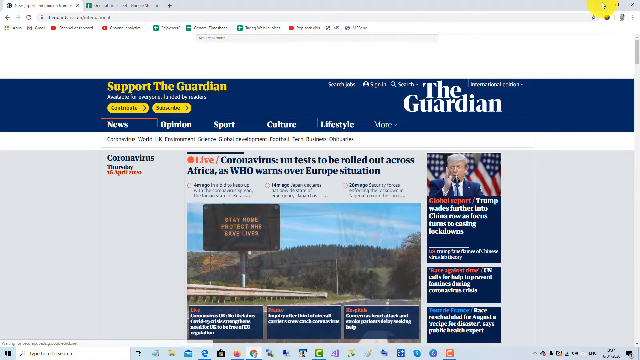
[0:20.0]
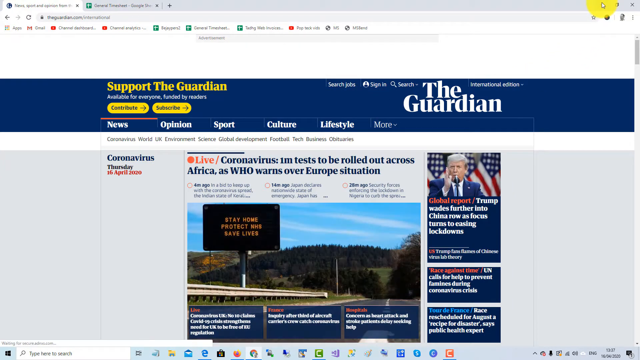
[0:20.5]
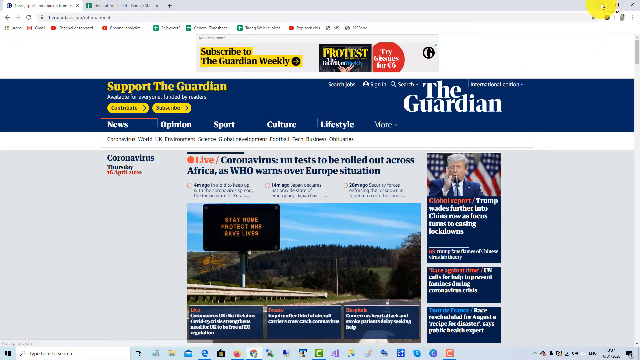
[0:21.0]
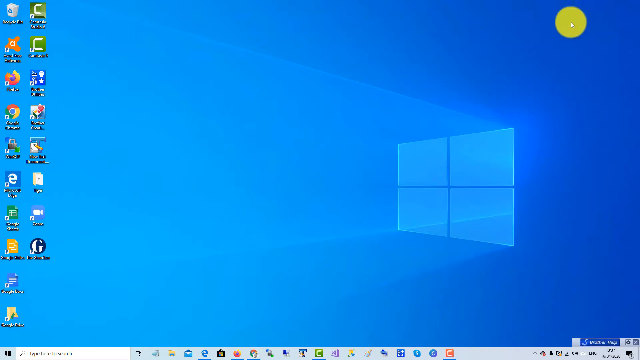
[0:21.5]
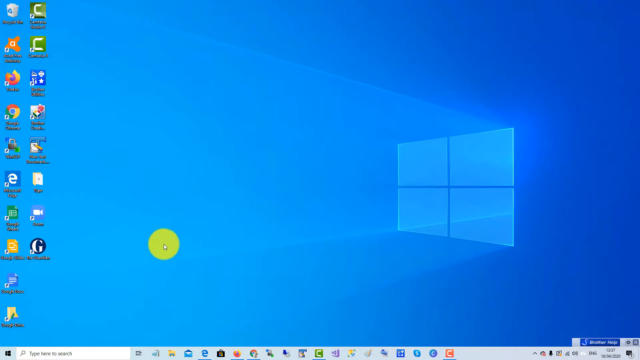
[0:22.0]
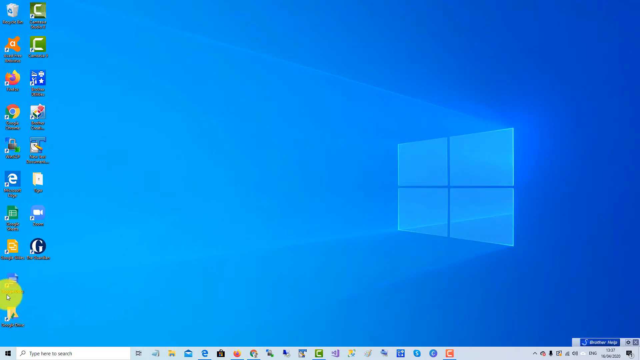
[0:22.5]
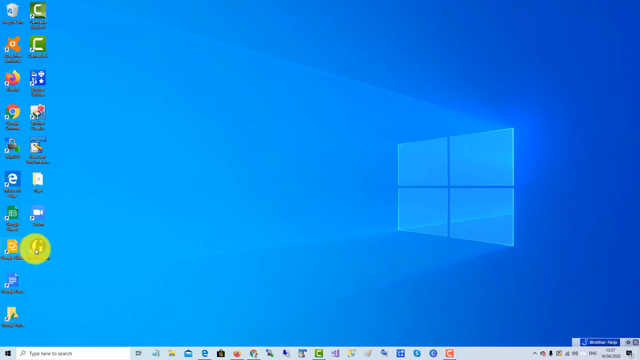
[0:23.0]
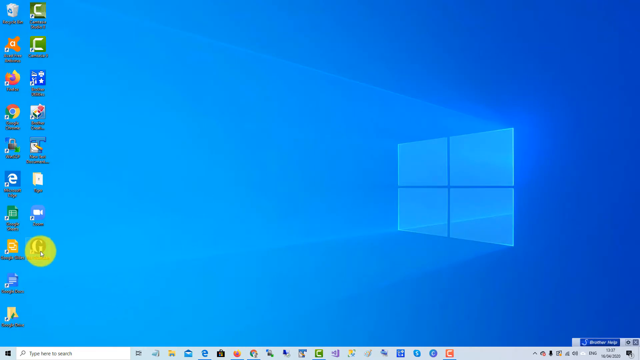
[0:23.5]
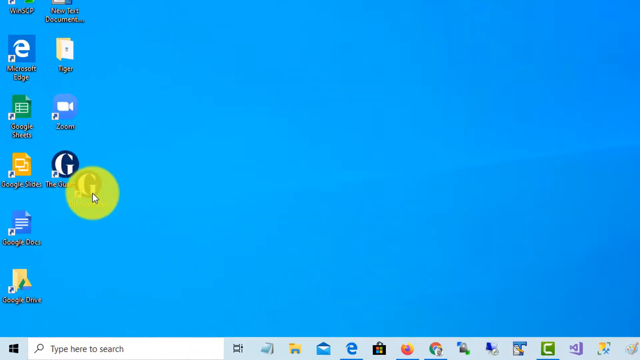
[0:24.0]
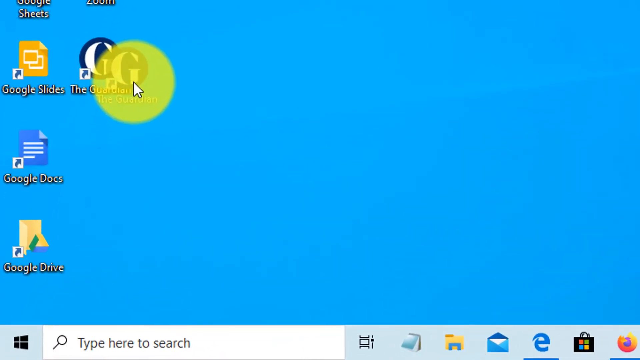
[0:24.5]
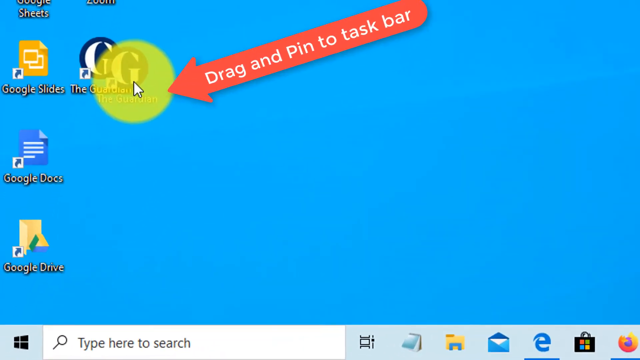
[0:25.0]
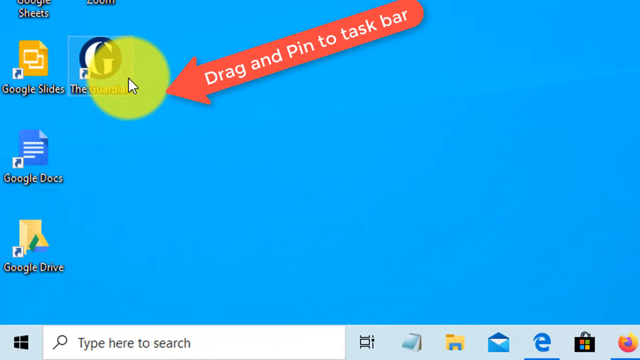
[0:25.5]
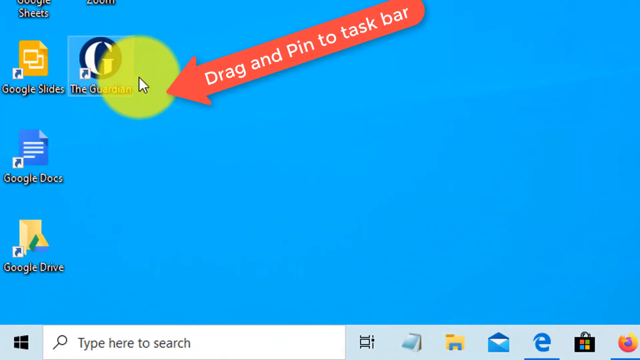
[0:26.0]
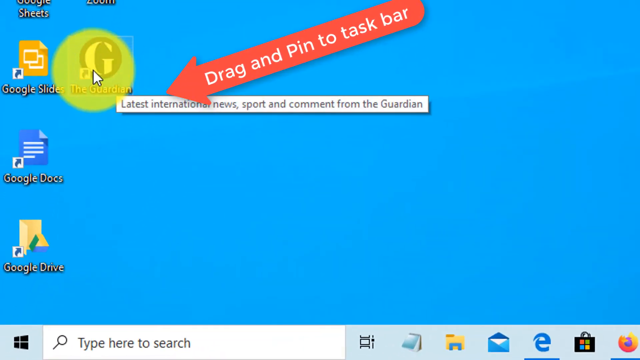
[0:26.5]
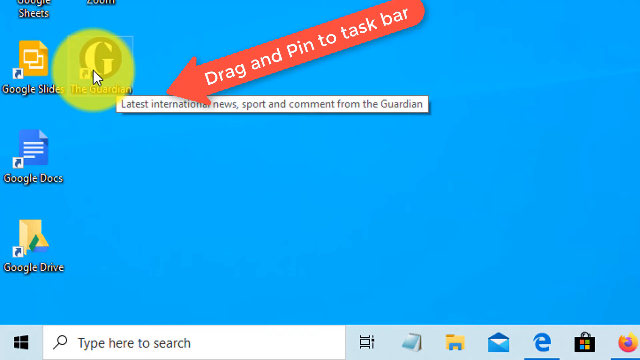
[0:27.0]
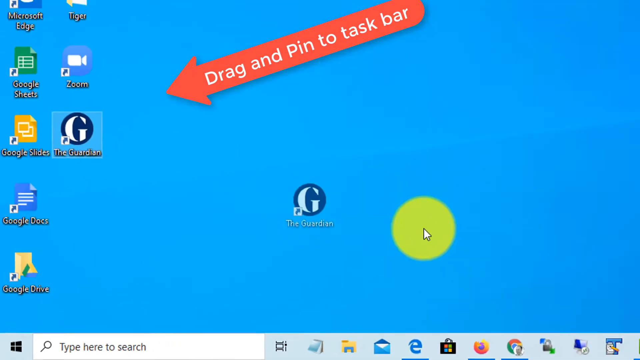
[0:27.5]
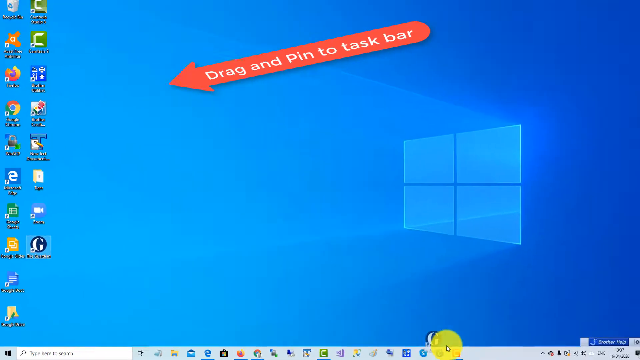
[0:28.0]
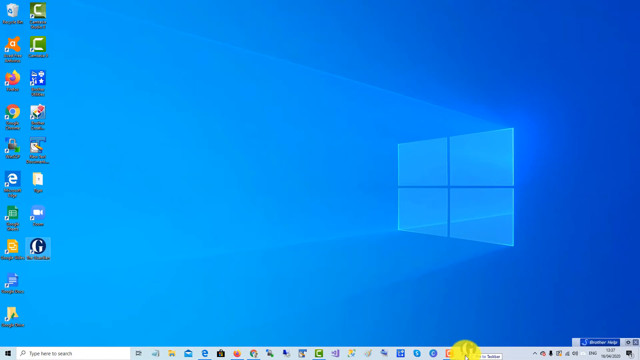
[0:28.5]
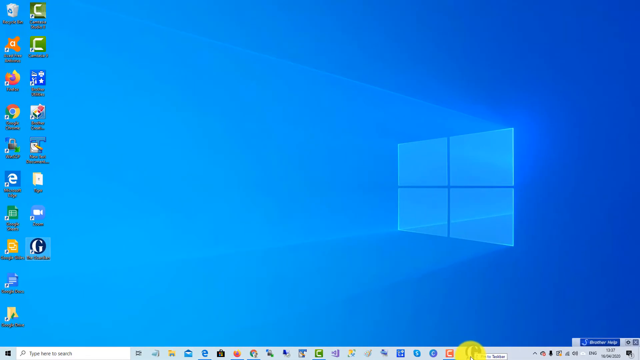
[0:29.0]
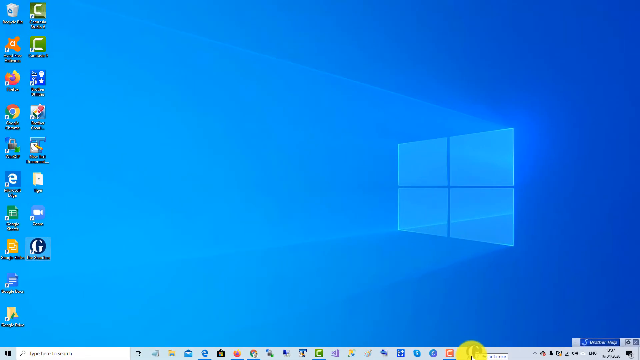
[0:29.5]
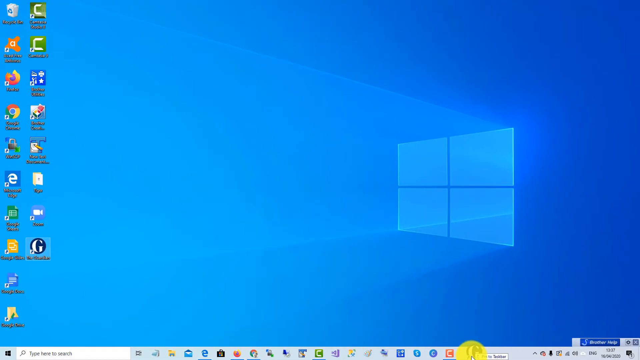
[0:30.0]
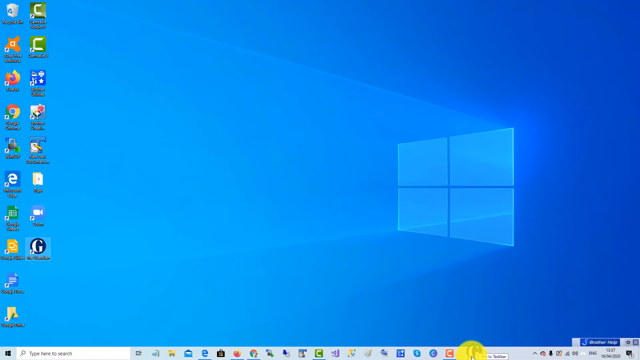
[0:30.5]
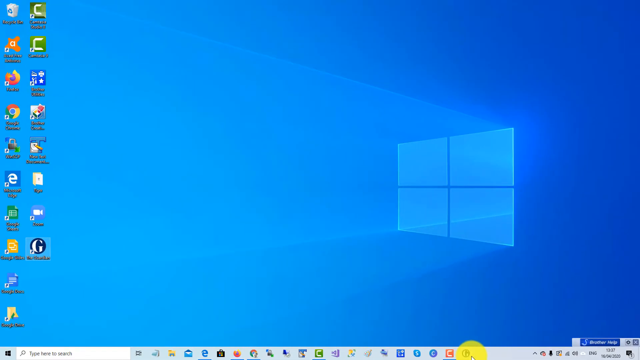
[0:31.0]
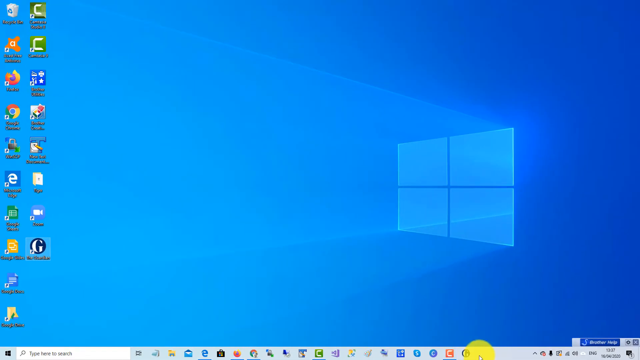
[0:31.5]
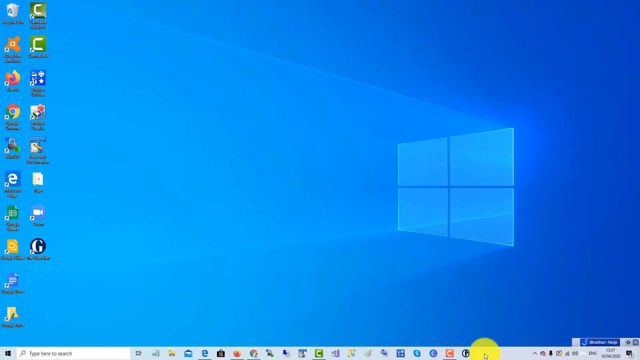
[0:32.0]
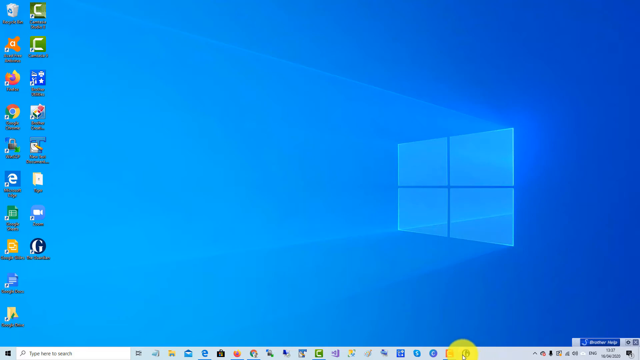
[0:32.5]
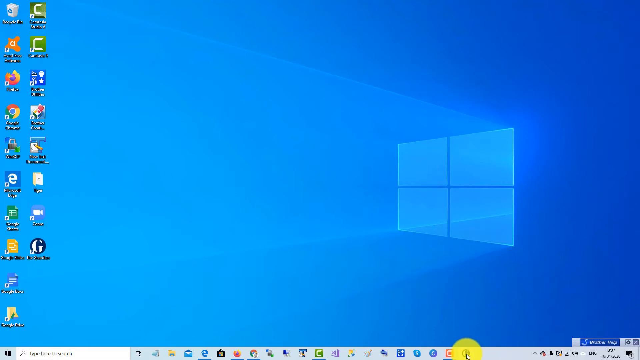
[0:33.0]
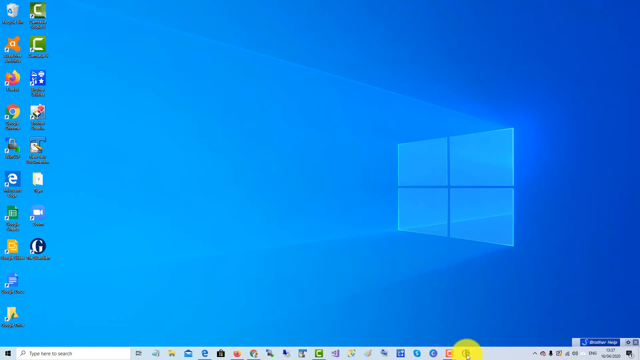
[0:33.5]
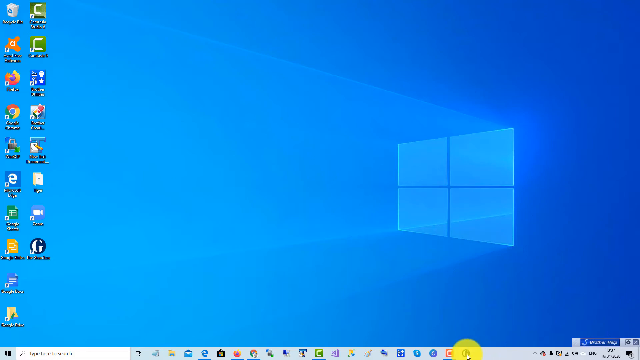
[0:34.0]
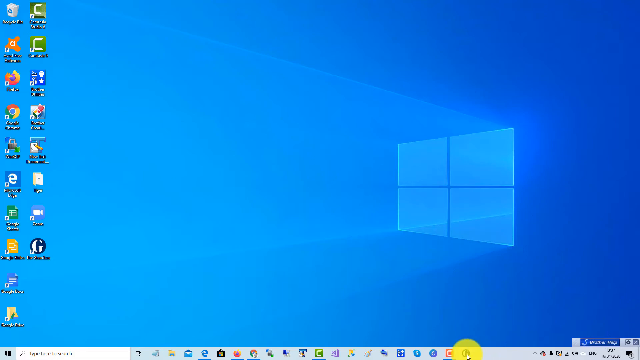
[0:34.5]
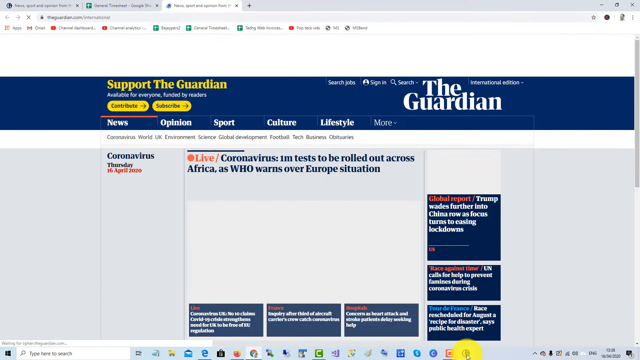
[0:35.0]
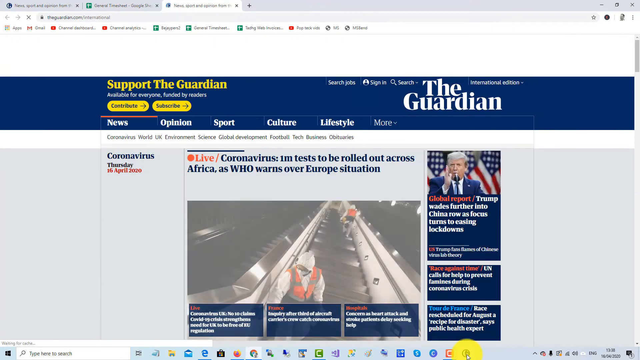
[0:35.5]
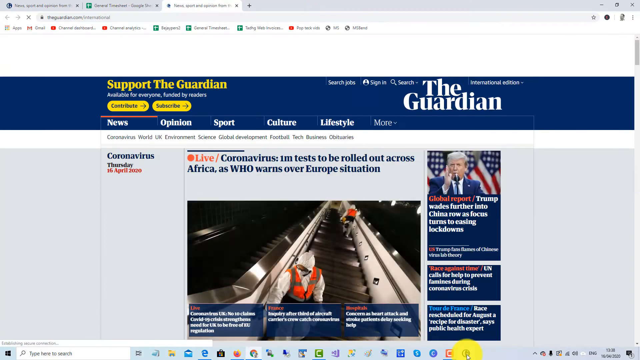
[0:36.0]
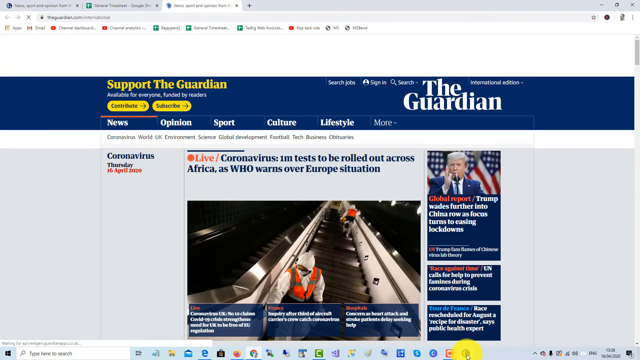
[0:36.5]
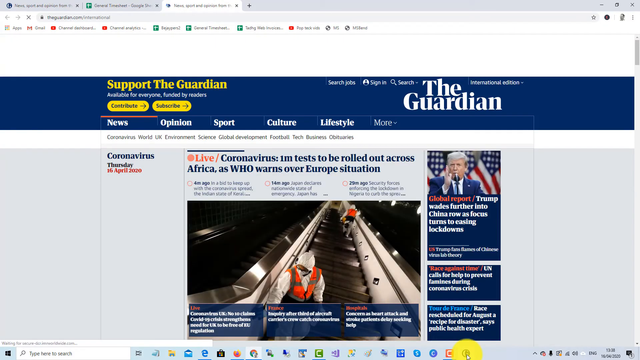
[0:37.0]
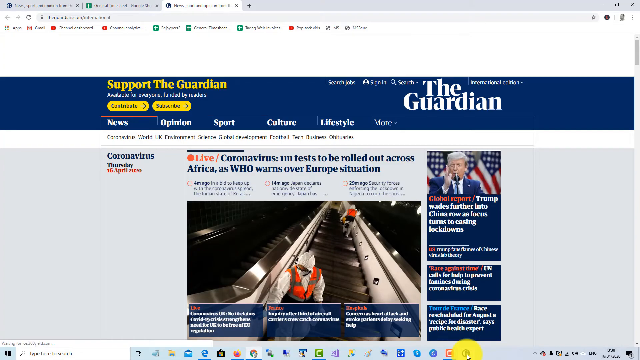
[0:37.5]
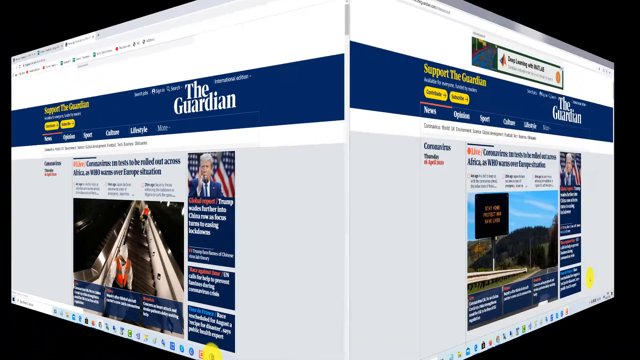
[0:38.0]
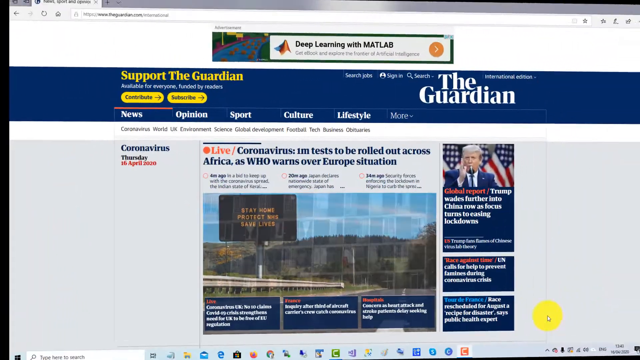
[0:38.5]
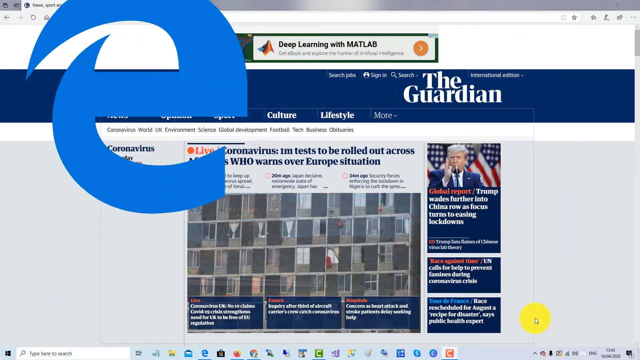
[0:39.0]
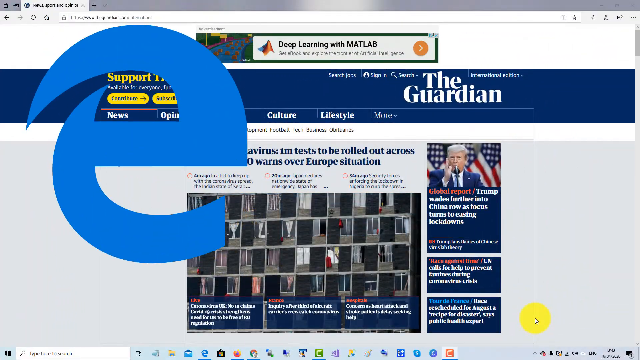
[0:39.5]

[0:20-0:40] The demonstration shows how to drag and pin a file. The Guardian is clicked; there is a file about the Guardian being dragged and pinned, and then it is opened. An article appears showing the Guardian's lifestyle, news, sport and culture sections, with the text "coronavirus, one million tests to be rolled out across Africa". Donald Trump and the flag of the USA appear with a caption too small to read. Google Slides, Google Pictures, Chrome and a Windows screen are visible. A poster reads "stay home, protect this, save lives". There are trees and something like a small mountain in the background.